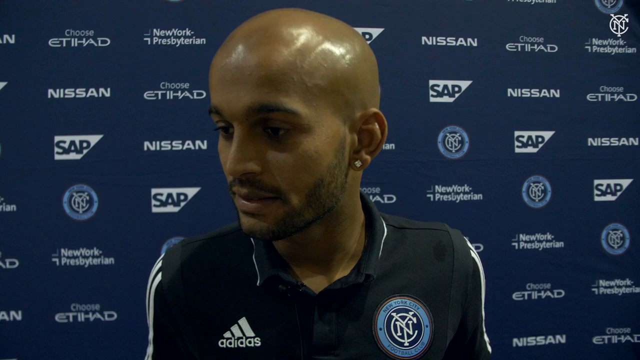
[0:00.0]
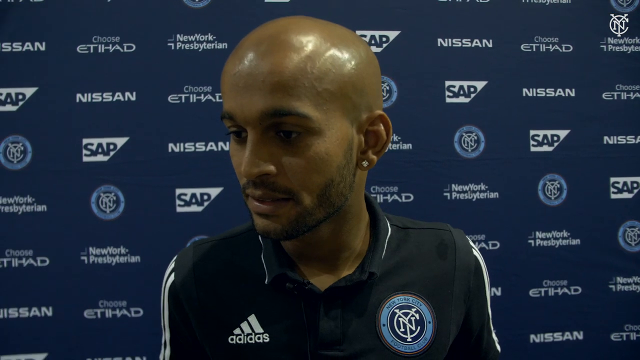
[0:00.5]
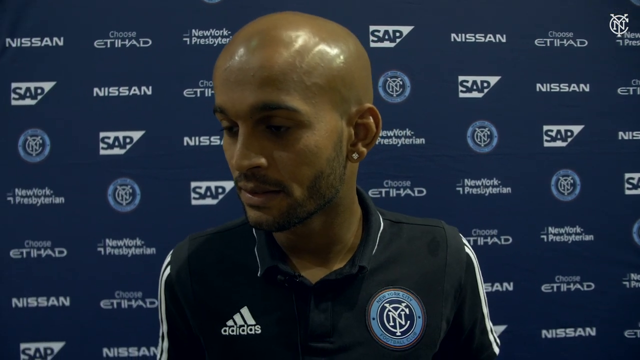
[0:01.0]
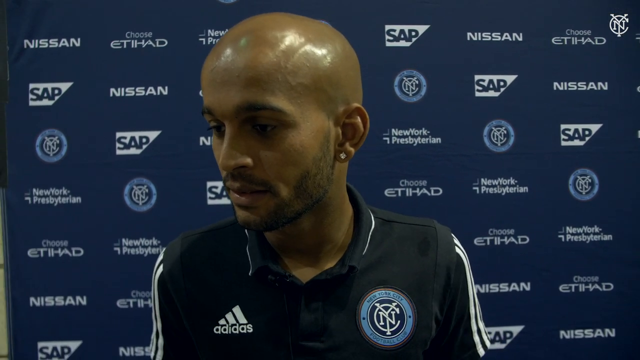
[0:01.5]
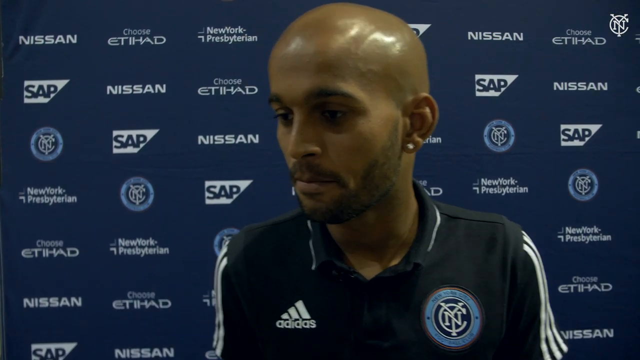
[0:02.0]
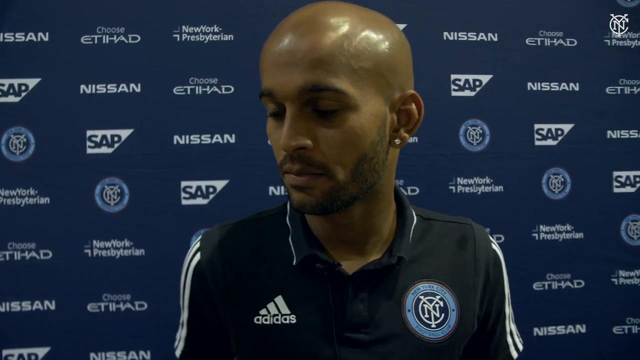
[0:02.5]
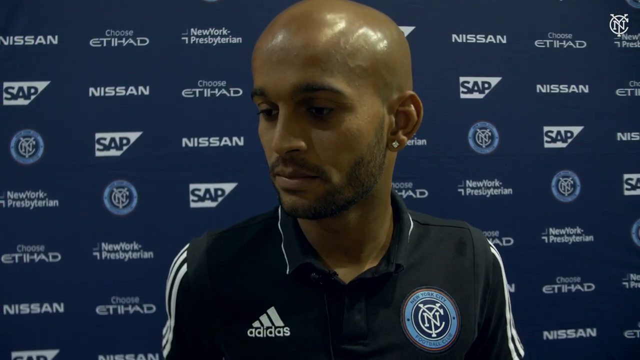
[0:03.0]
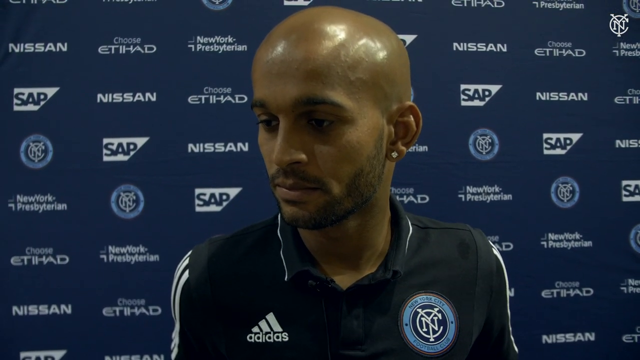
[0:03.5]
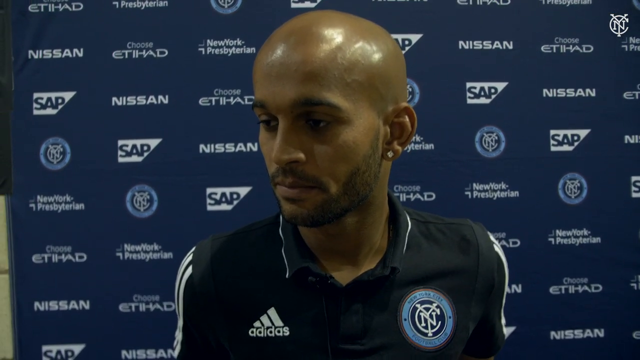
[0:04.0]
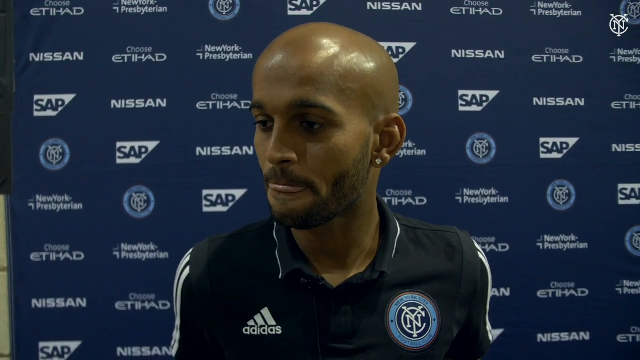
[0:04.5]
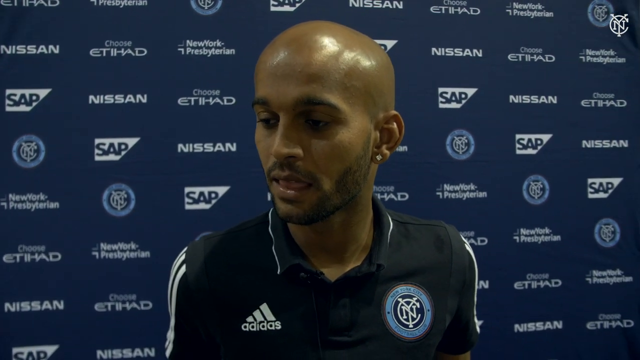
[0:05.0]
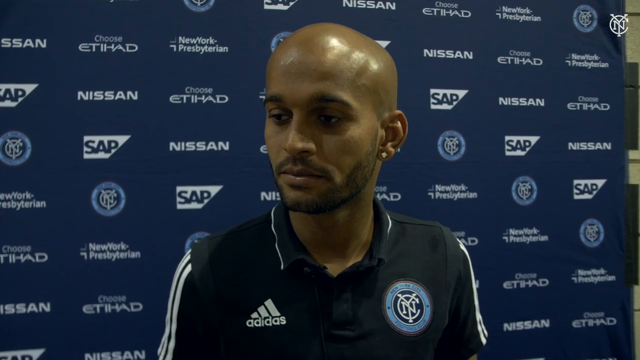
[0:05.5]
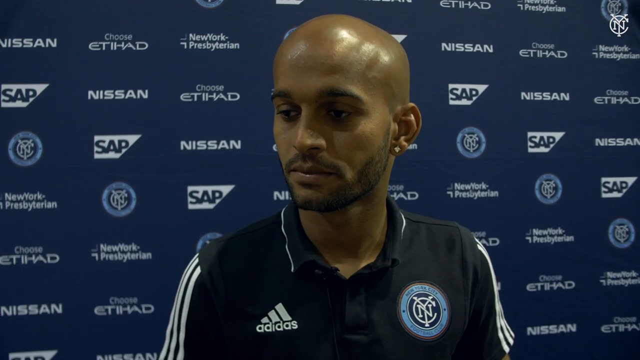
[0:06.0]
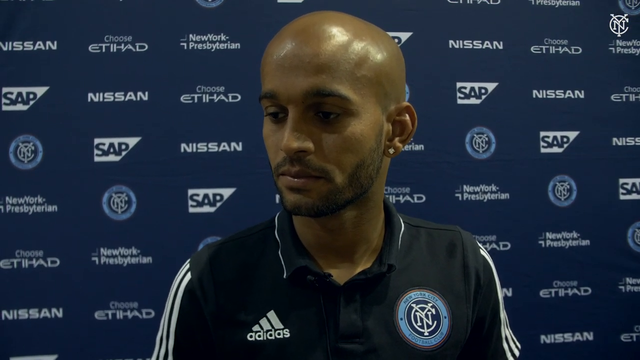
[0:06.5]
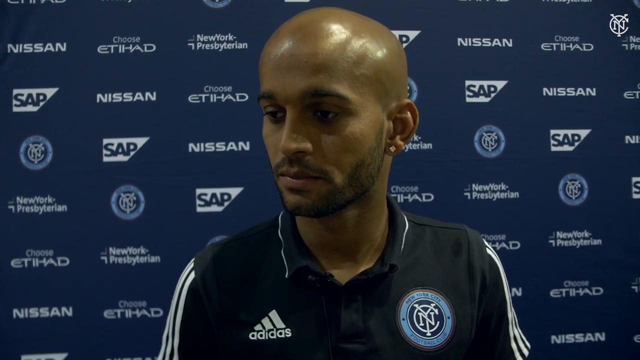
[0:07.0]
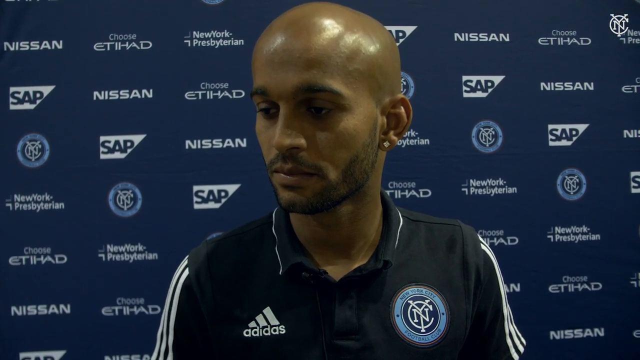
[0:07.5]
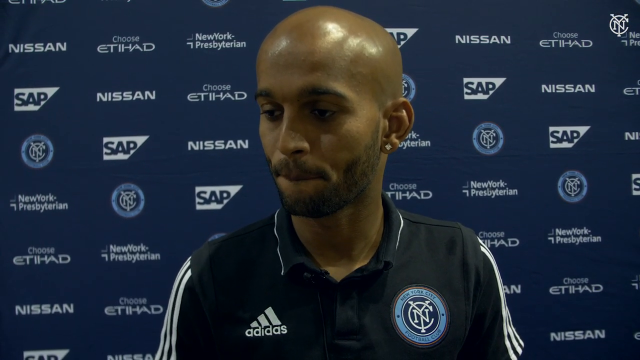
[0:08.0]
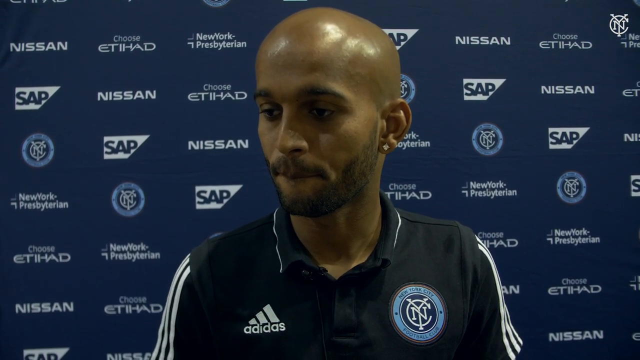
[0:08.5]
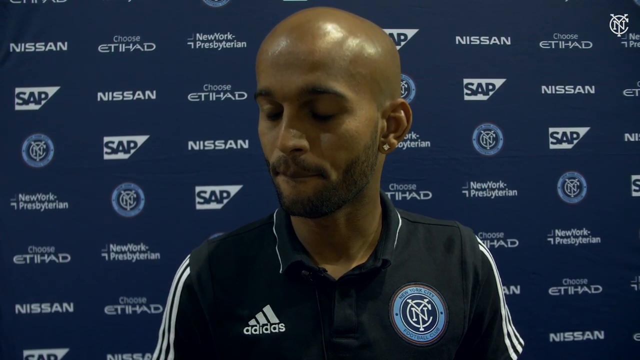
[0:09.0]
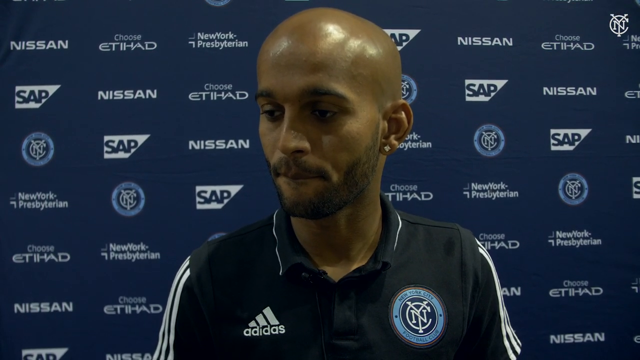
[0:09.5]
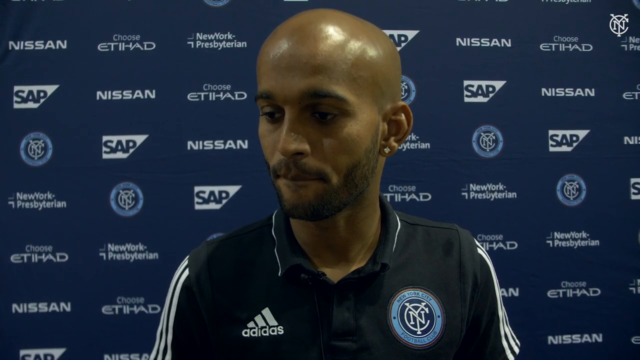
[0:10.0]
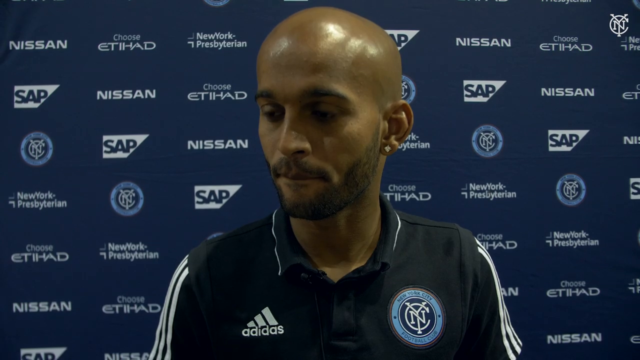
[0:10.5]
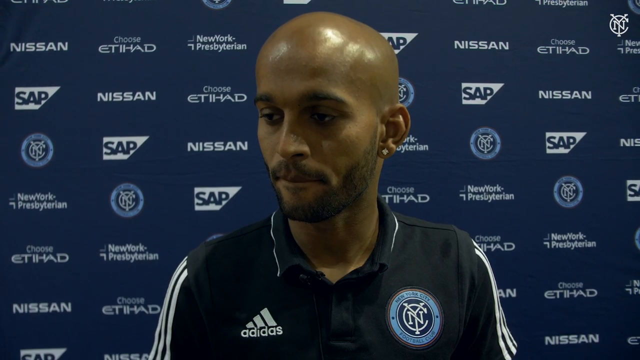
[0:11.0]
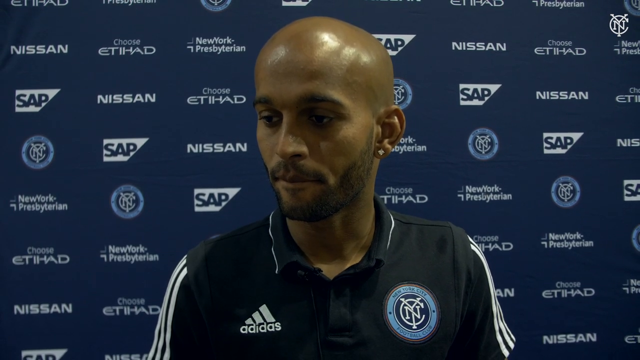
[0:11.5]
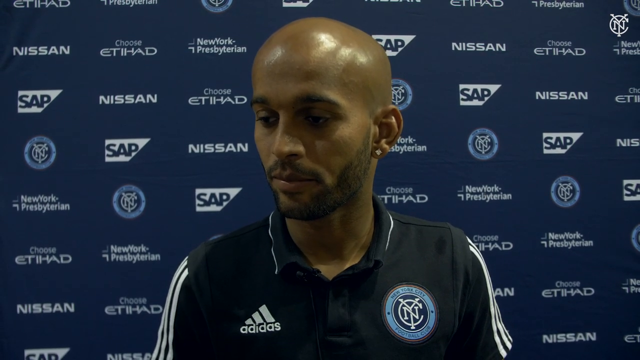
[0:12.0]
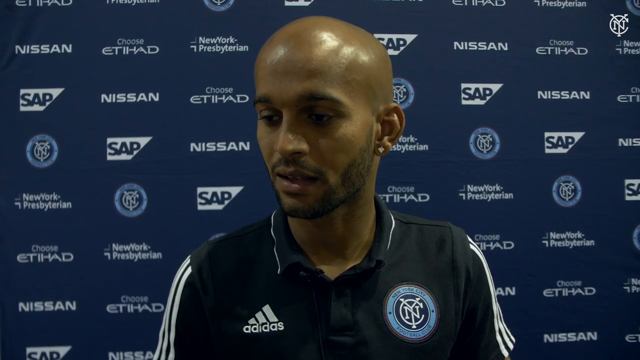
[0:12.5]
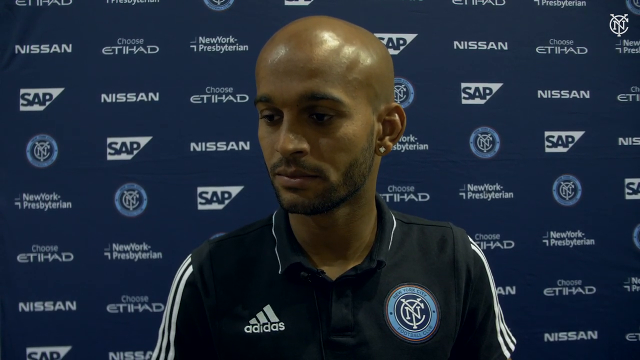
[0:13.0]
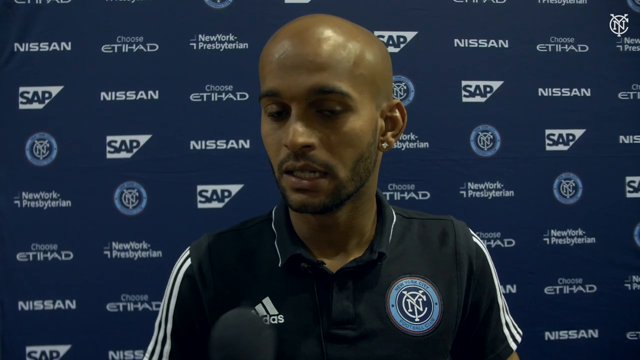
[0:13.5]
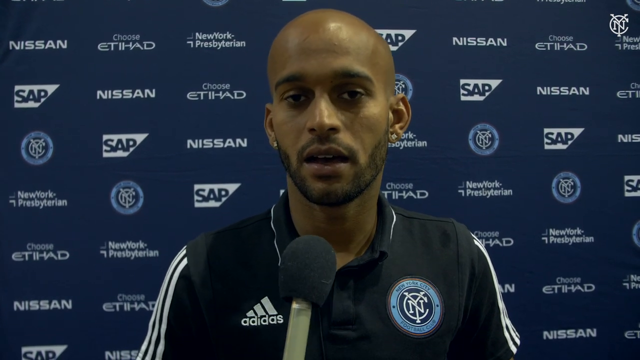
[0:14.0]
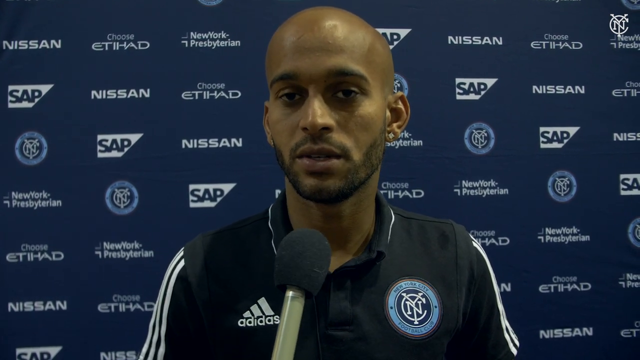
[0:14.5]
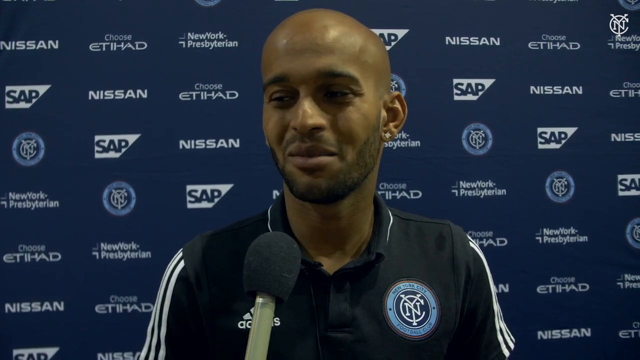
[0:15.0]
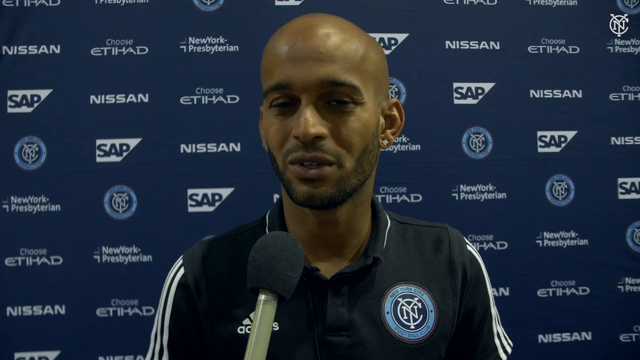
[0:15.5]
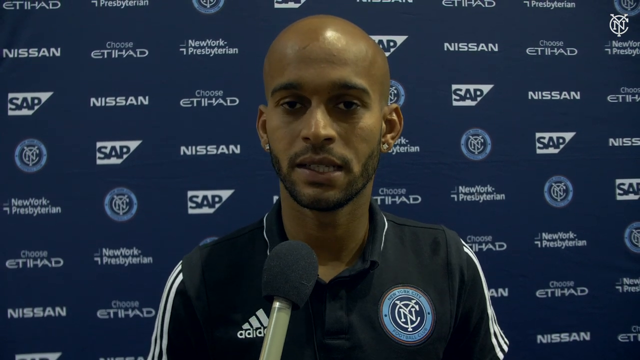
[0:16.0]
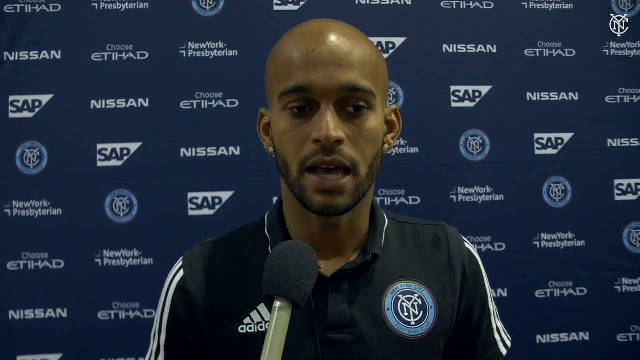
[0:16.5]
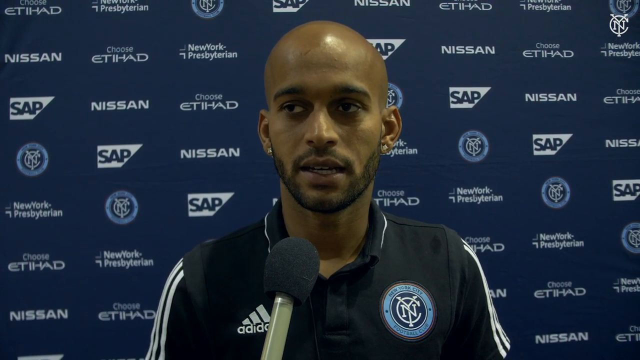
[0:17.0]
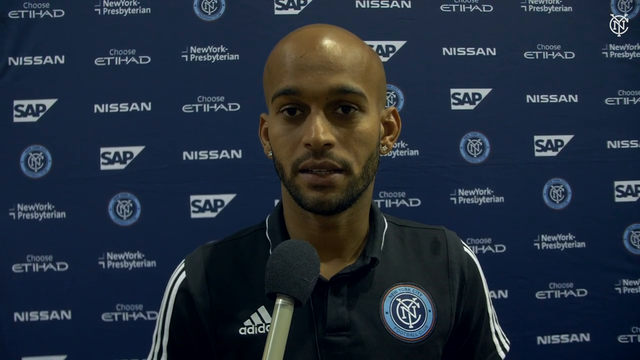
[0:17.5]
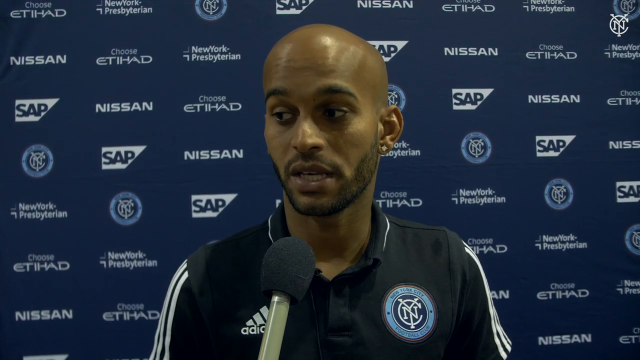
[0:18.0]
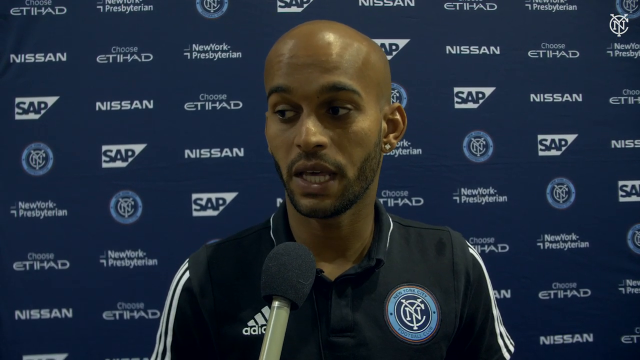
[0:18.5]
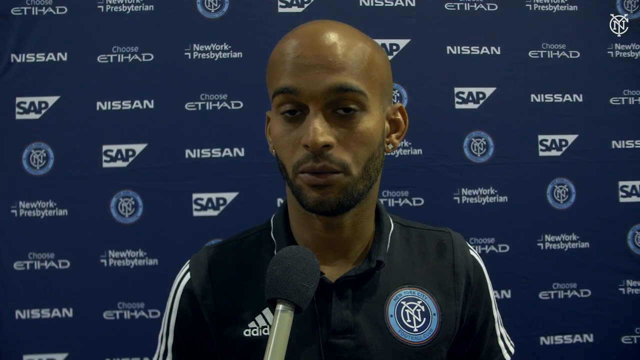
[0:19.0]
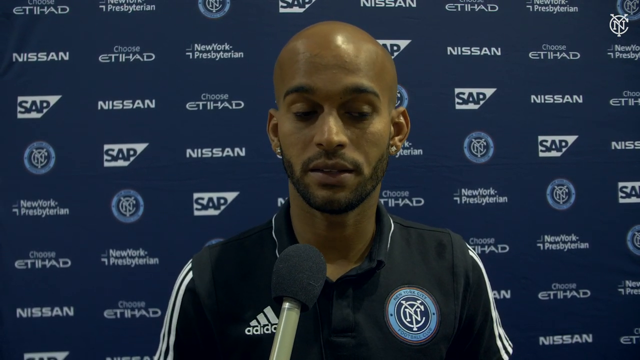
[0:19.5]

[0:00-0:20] A person is being interviewed, facing the camera with their head slightly turned to their right, toward the left side of the frame, while their eyes look straight ahead. They wear an earring in their left ear; the right ear is not visible because of the turn of the head. They shake their head and kind of open and close their mouth. A microphone then comes into view at the bottom center of the image, and the man turns his head and speaks directly to the camera. He occasionally turns to his right side and then back to the camera, and takes some deep breaths as he speaks.